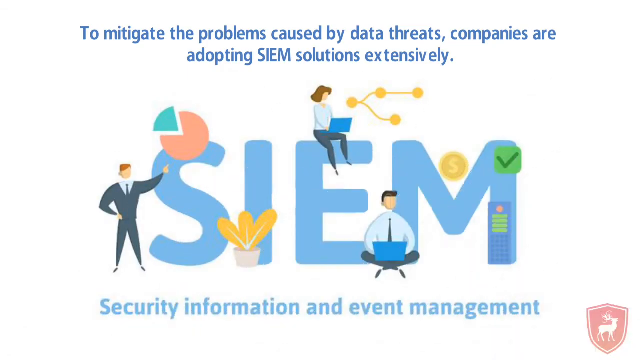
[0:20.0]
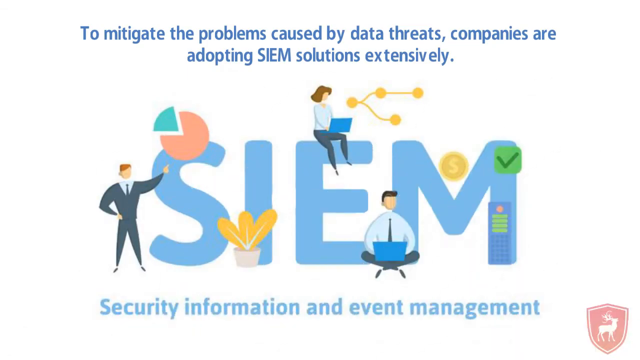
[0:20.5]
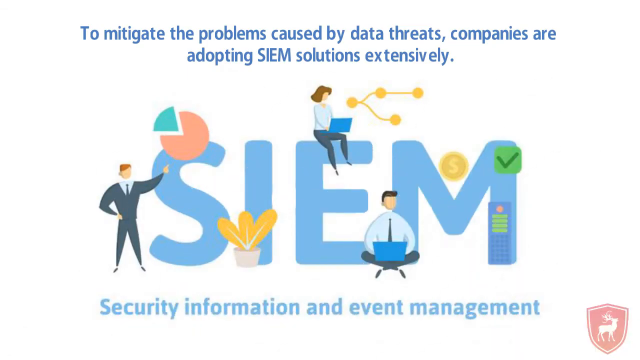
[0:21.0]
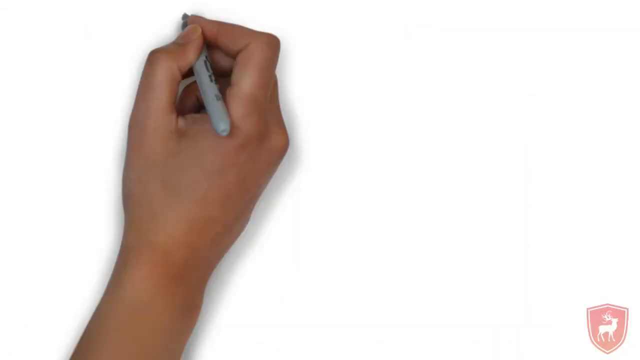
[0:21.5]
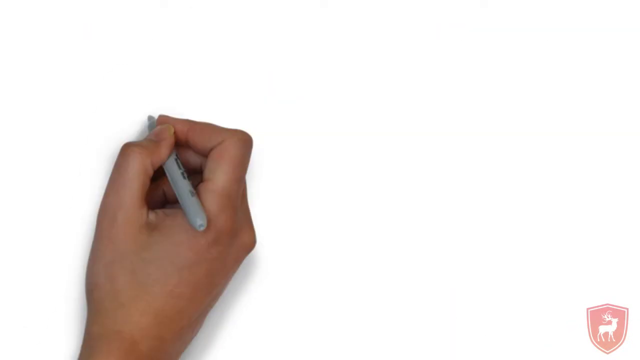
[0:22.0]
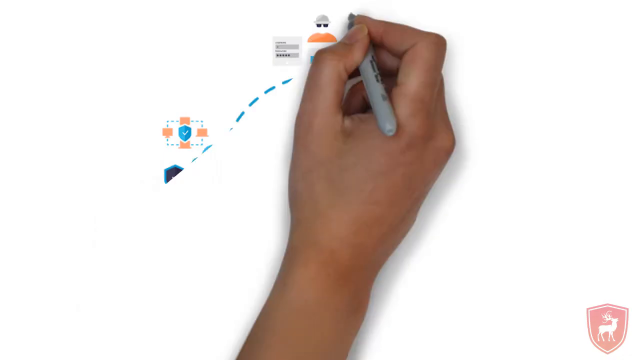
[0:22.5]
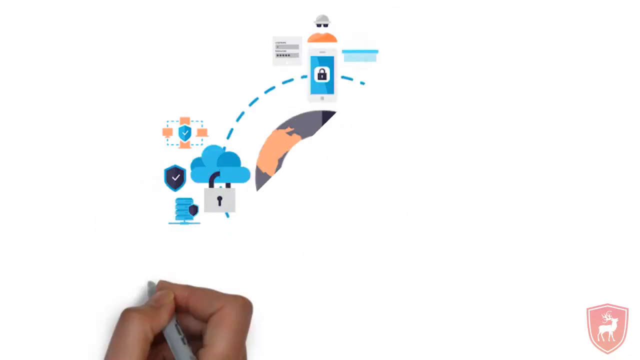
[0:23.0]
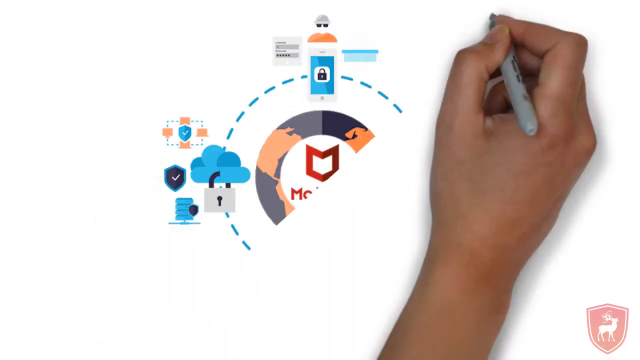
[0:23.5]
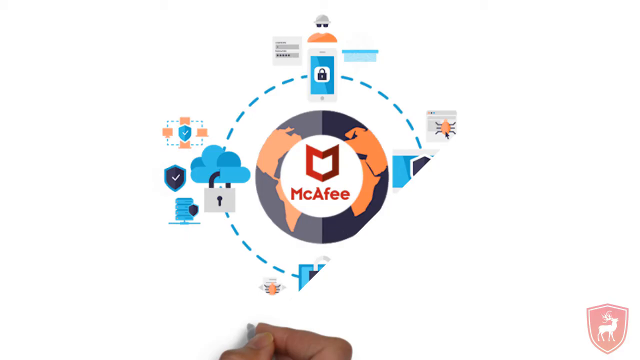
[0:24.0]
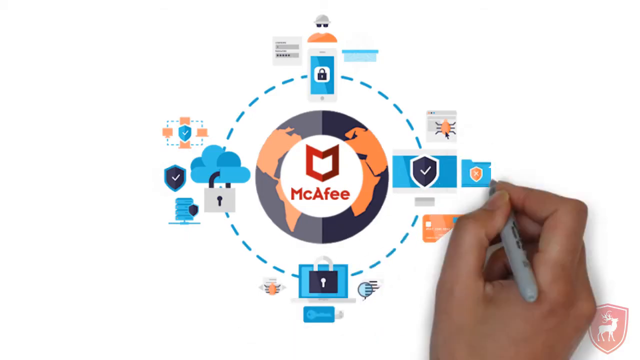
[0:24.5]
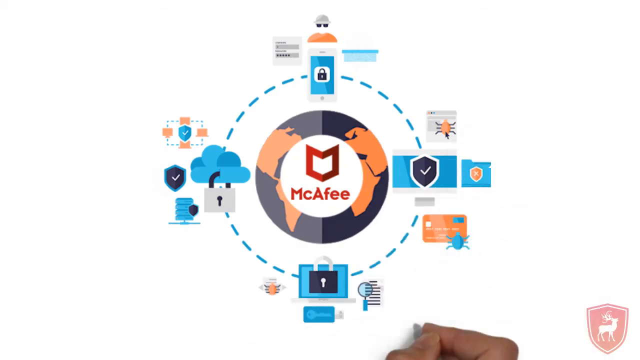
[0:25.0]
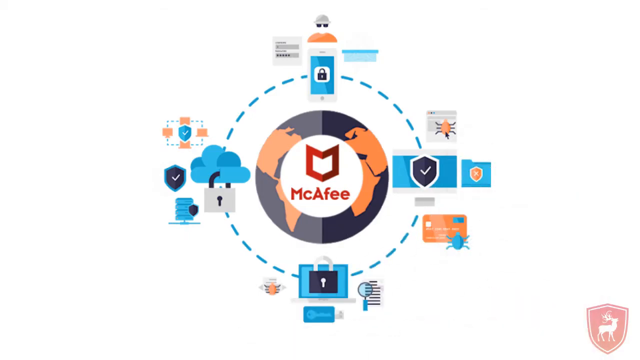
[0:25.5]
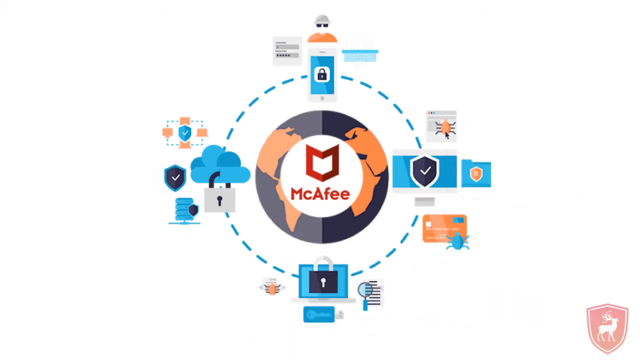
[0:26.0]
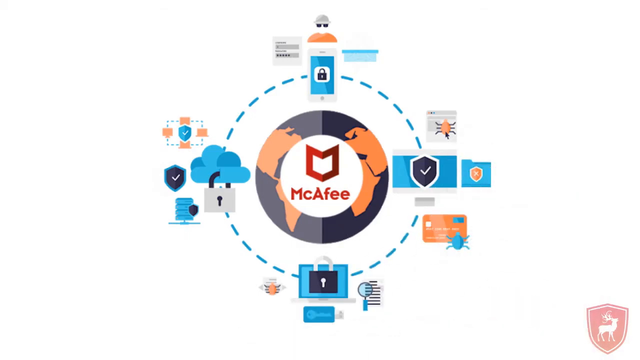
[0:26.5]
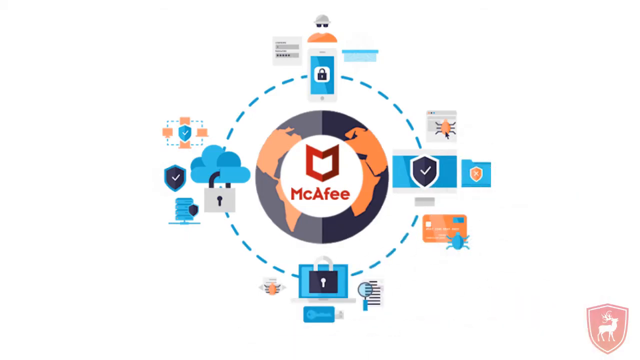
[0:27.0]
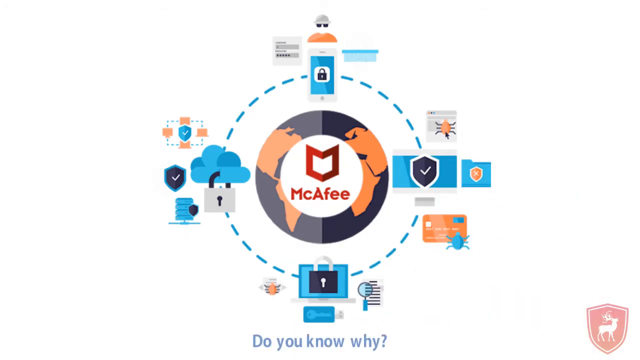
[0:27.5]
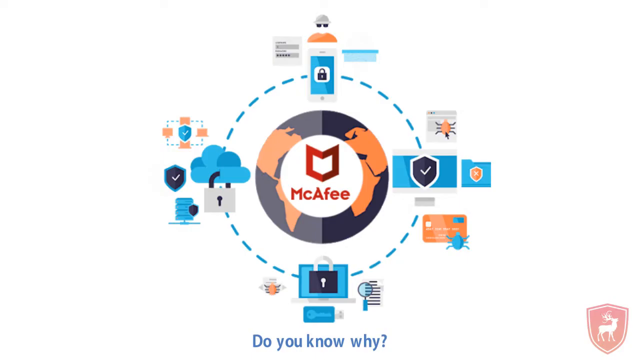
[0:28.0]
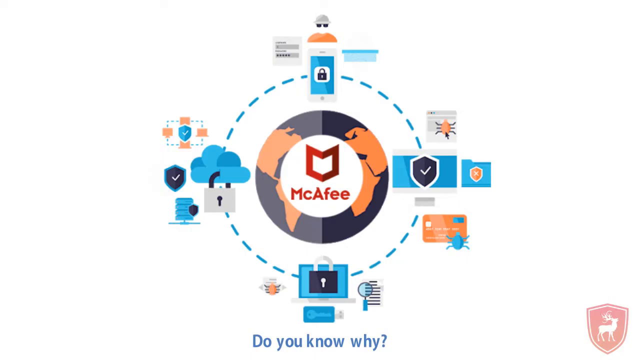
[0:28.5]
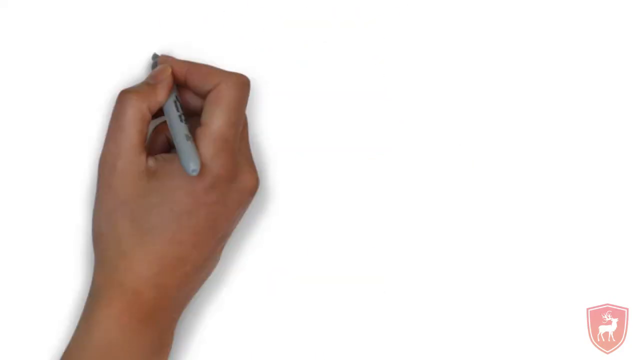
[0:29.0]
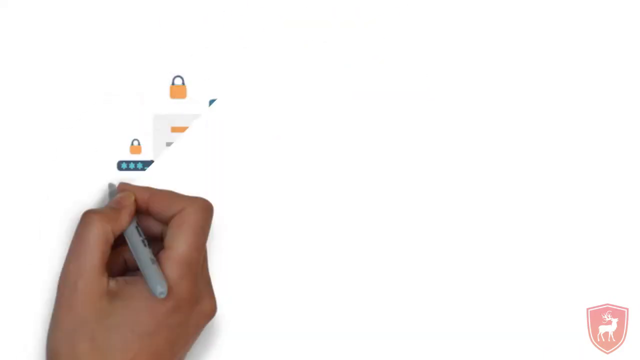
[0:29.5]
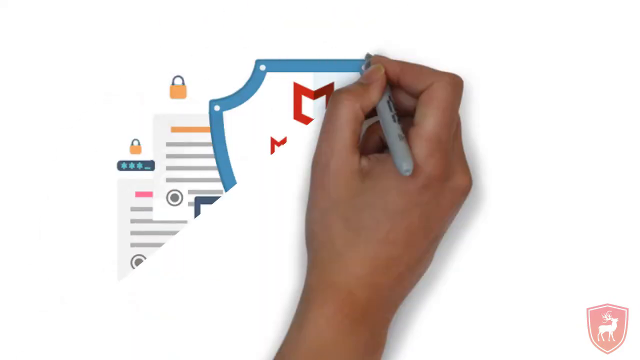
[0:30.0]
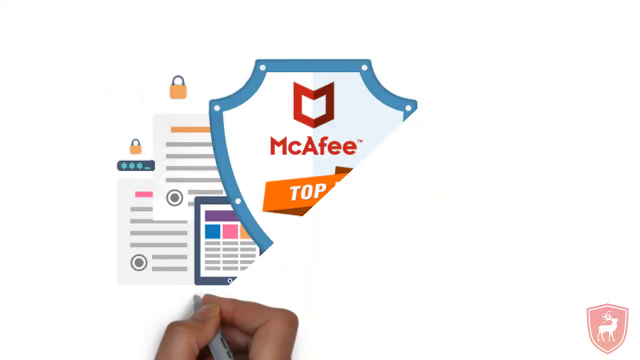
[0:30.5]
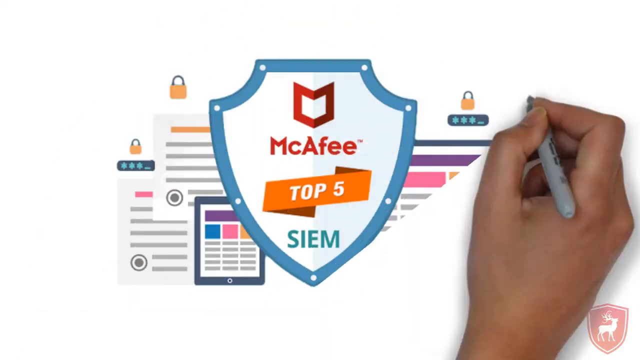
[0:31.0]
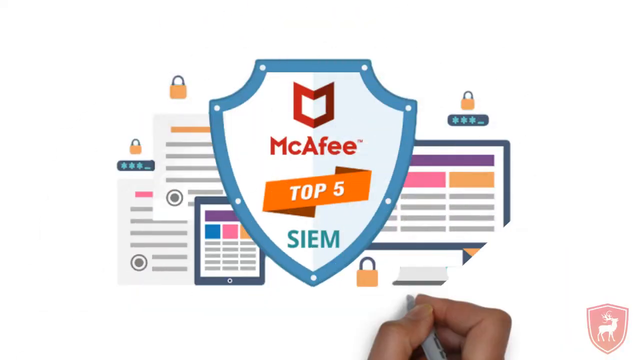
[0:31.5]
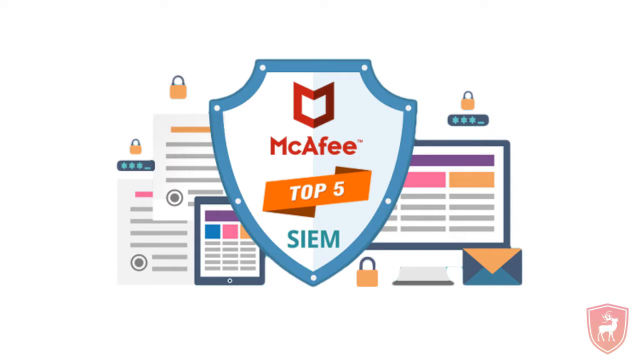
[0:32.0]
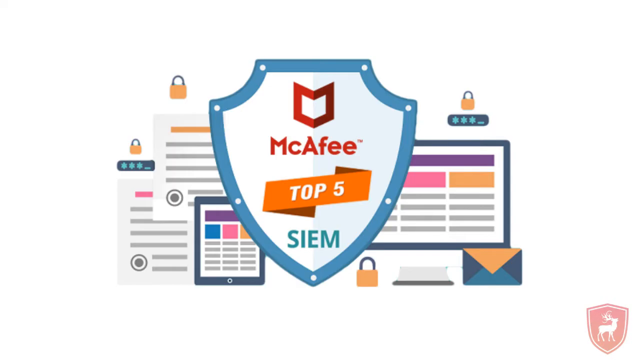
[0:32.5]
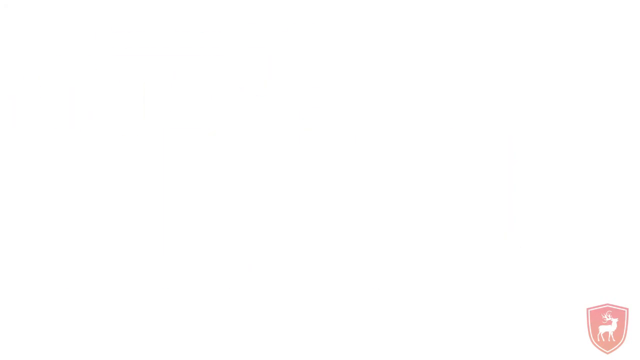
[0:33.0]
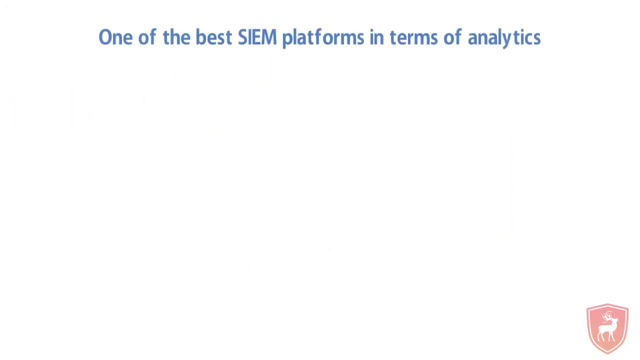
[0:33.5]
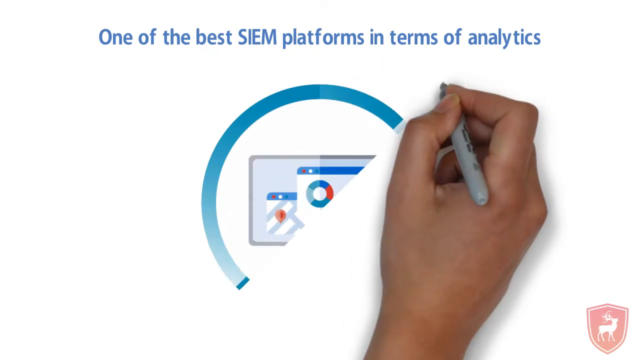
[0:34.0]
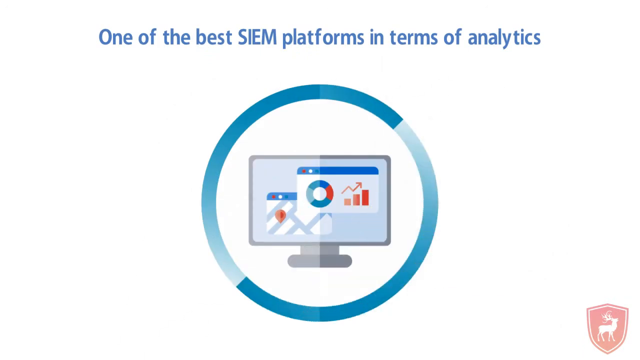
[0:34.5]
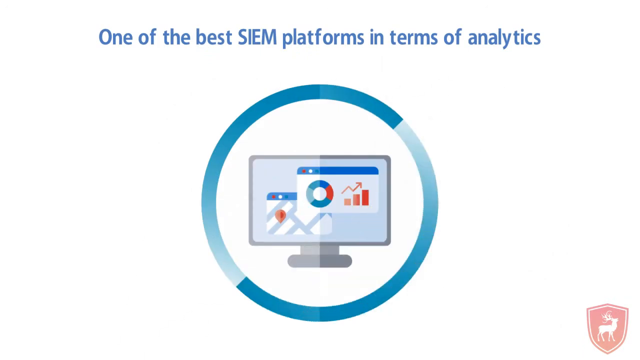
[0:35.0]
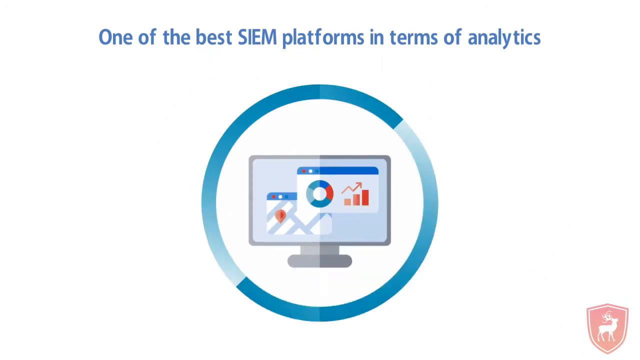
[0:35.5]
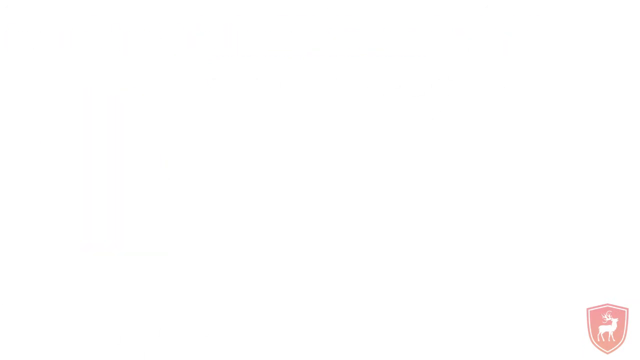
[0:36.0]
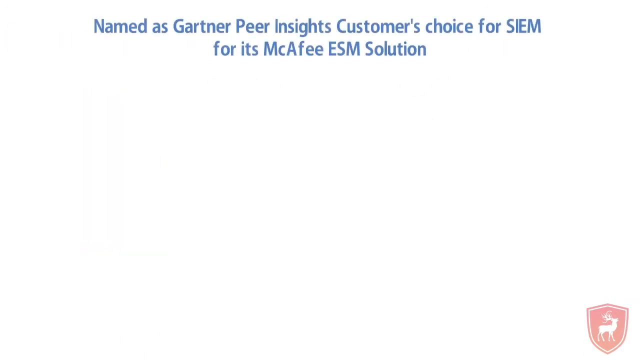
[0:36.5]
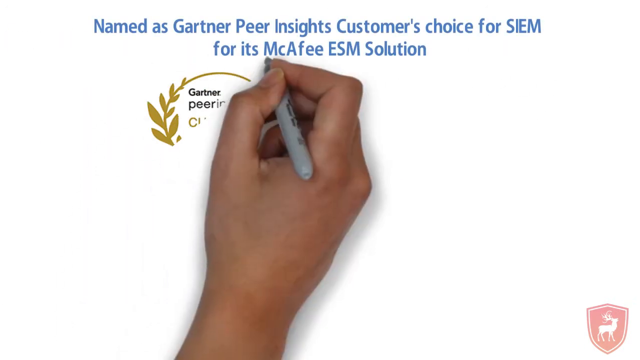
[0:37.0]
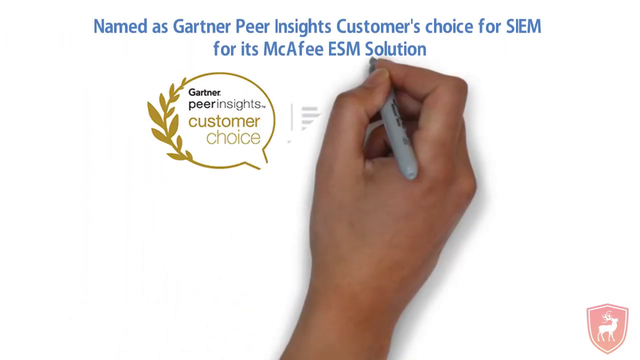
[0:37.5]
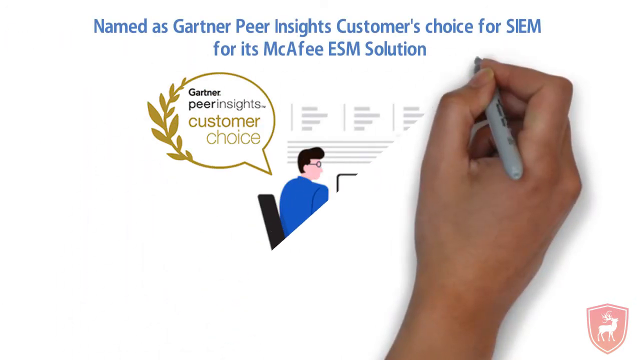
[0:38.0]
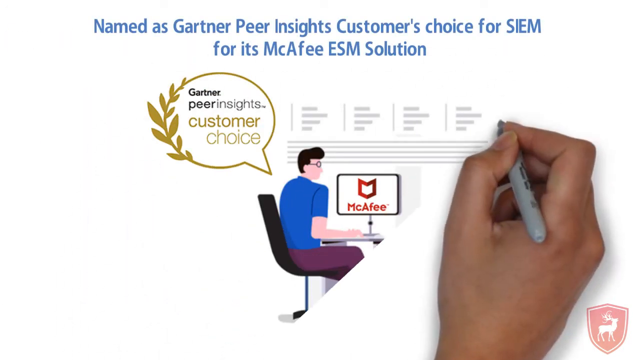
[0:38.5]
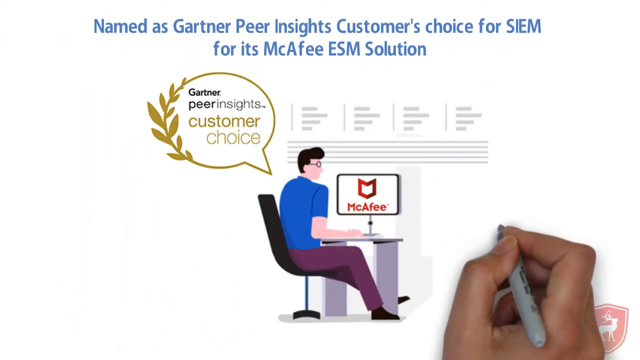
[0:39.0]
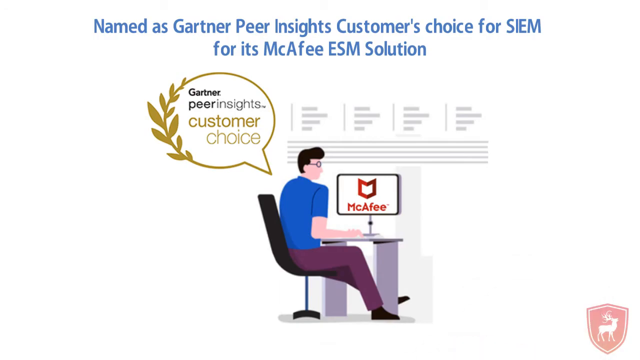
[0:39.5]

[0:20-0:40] The video appears to cover data management and how McAfee can help protect data. It shows that McAfee is one of the top five in protecting data and that it is the customer choice for its ESM solution. SIEM, Security Information Event Management, is mentioned.